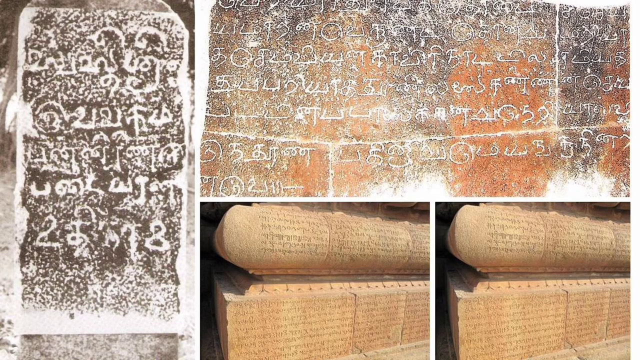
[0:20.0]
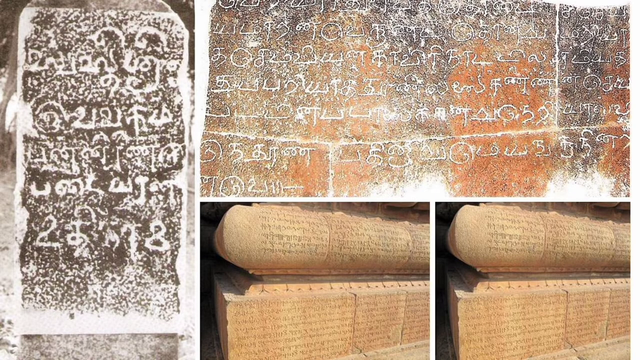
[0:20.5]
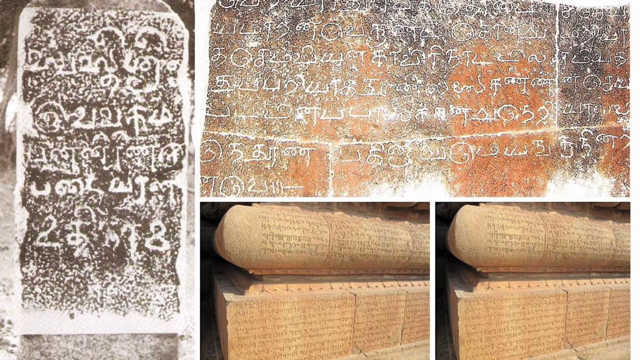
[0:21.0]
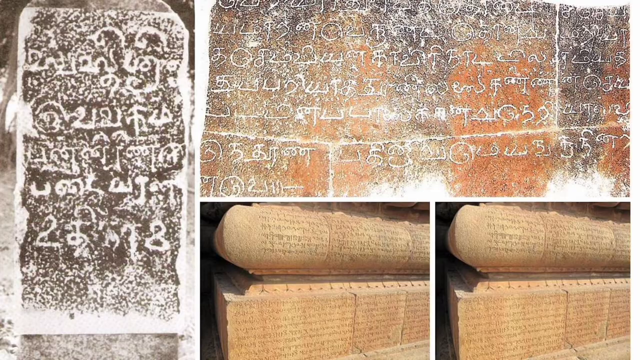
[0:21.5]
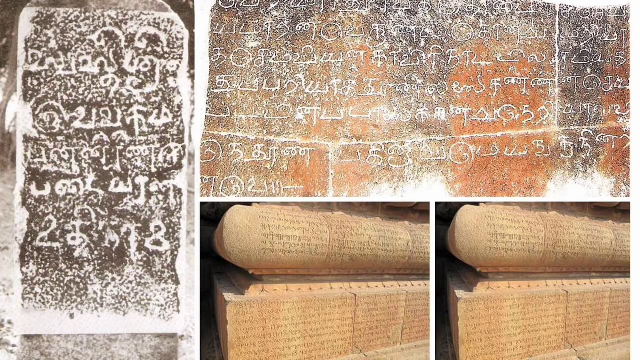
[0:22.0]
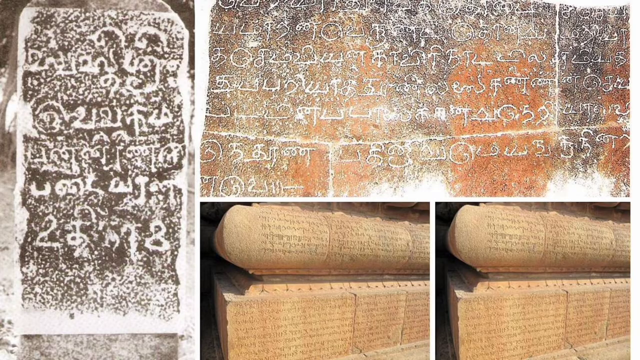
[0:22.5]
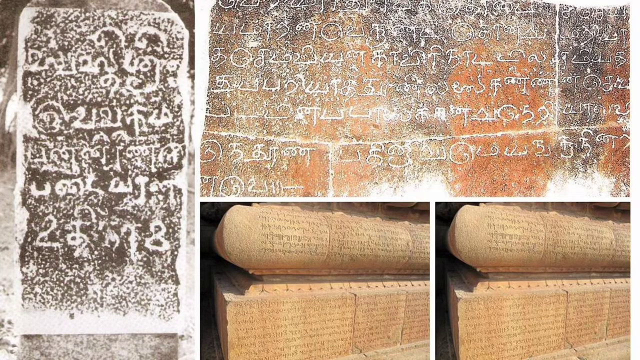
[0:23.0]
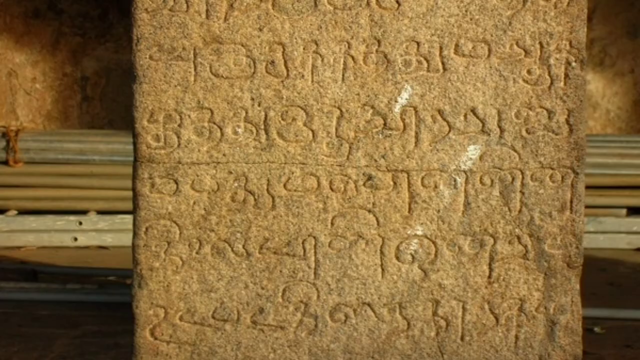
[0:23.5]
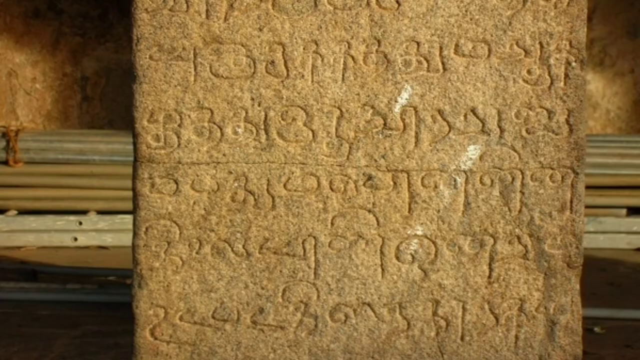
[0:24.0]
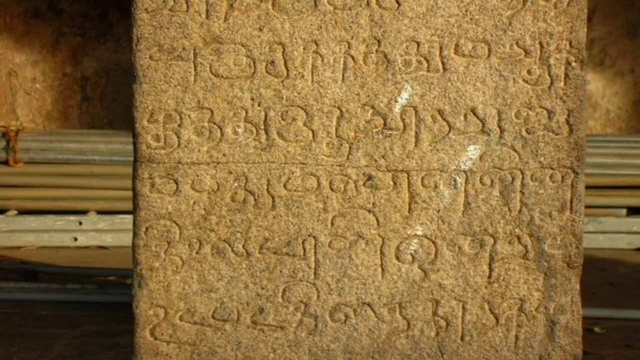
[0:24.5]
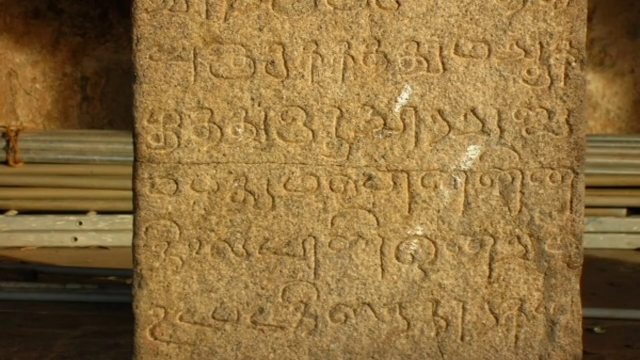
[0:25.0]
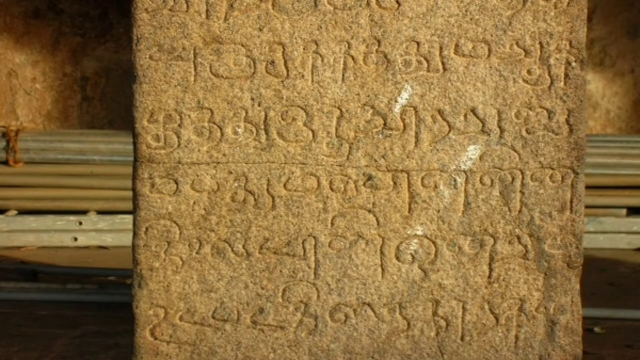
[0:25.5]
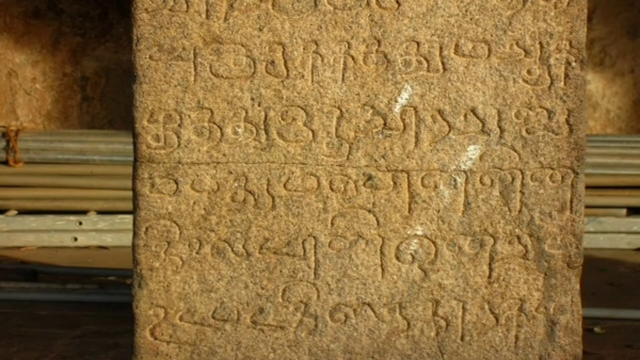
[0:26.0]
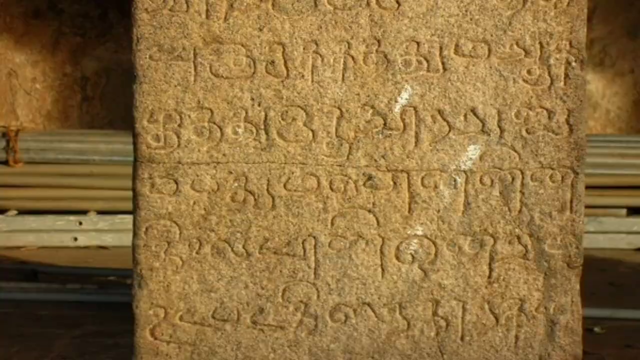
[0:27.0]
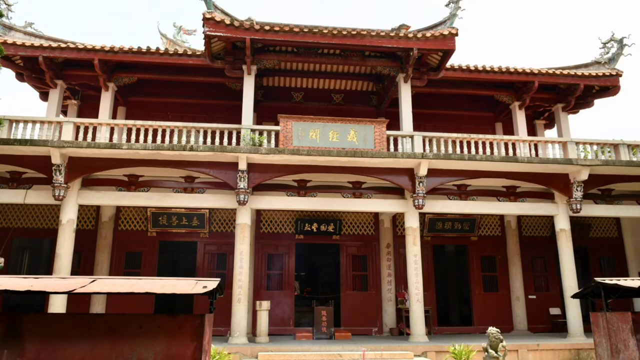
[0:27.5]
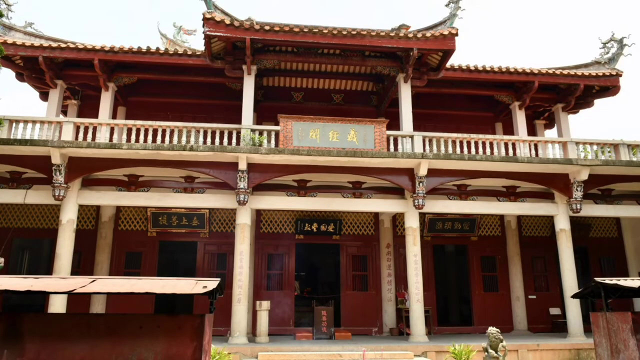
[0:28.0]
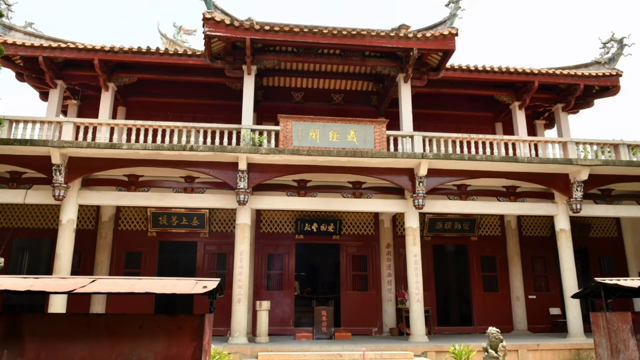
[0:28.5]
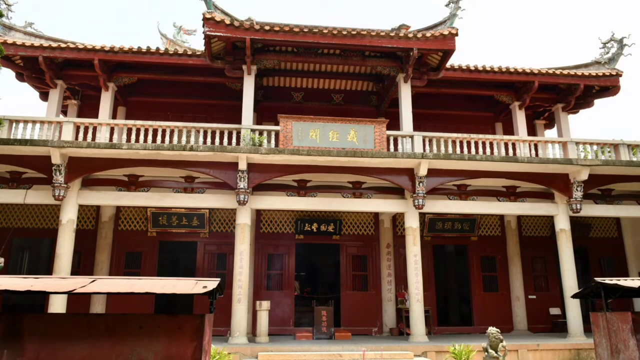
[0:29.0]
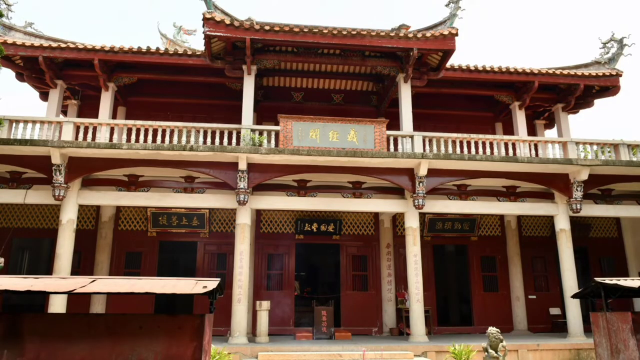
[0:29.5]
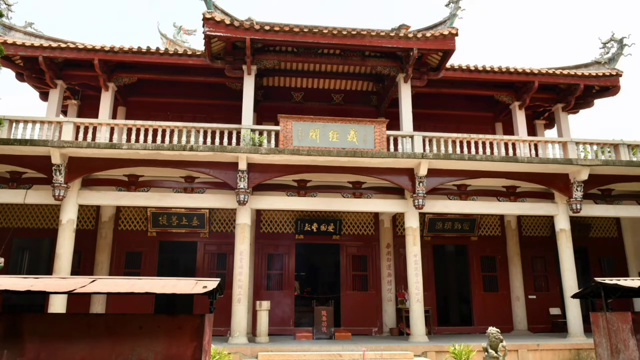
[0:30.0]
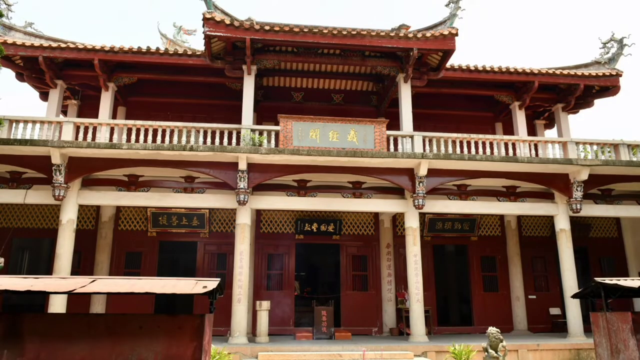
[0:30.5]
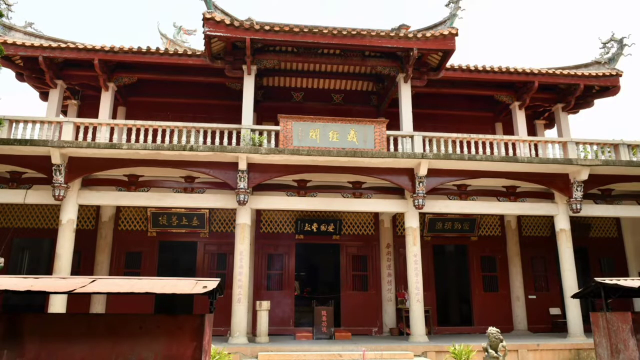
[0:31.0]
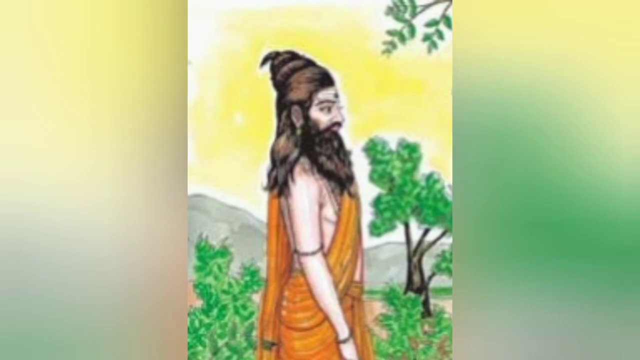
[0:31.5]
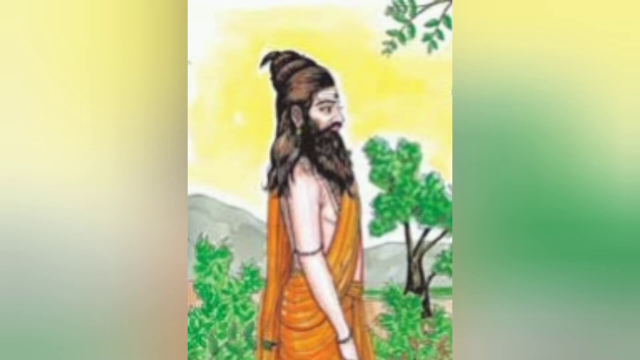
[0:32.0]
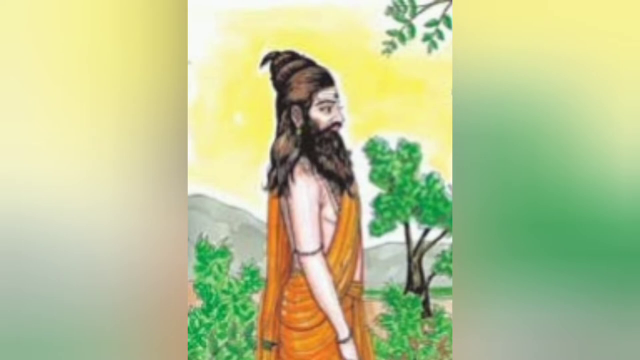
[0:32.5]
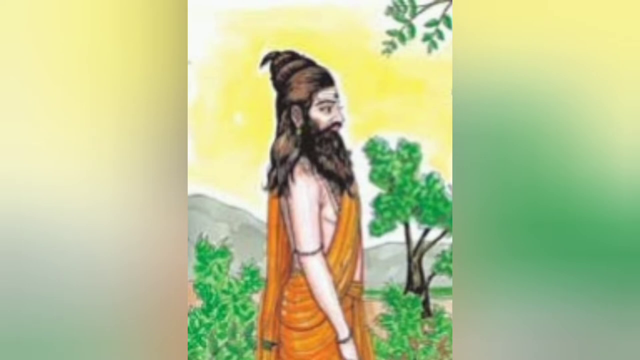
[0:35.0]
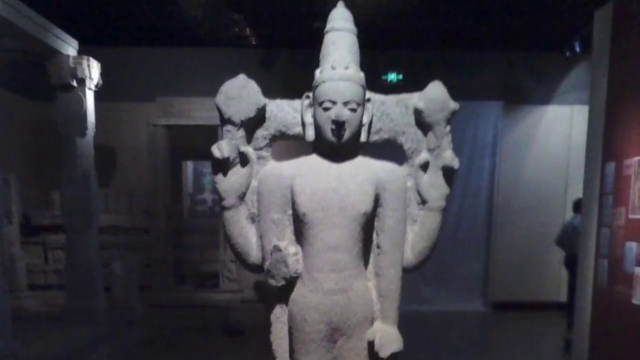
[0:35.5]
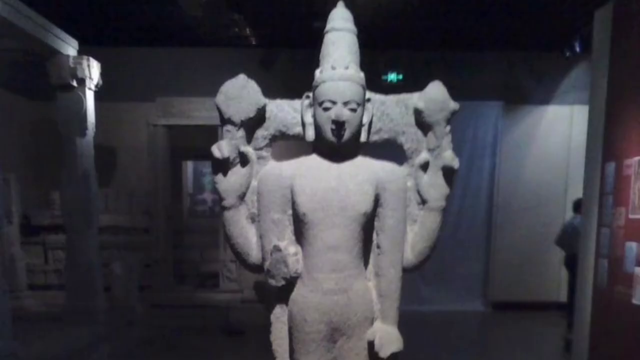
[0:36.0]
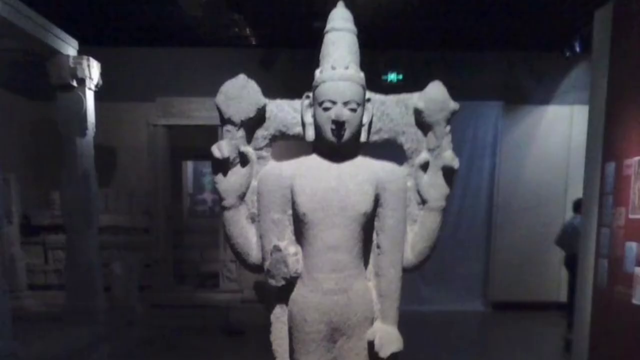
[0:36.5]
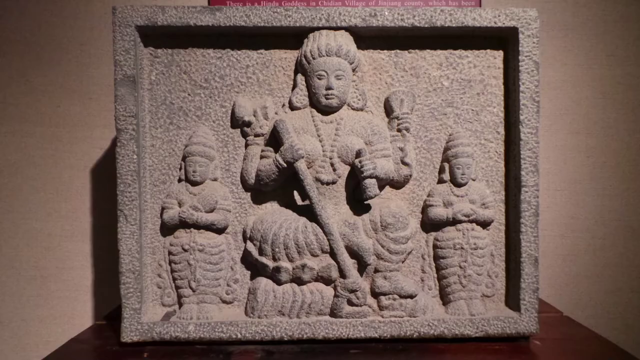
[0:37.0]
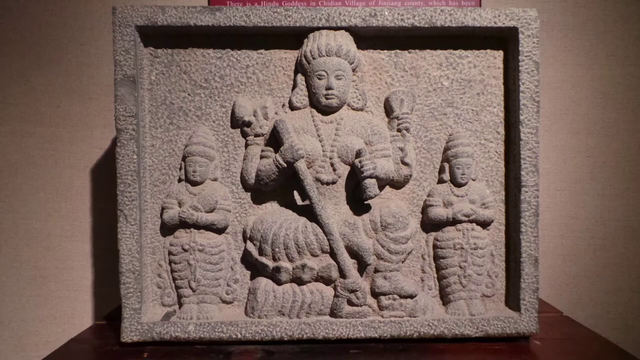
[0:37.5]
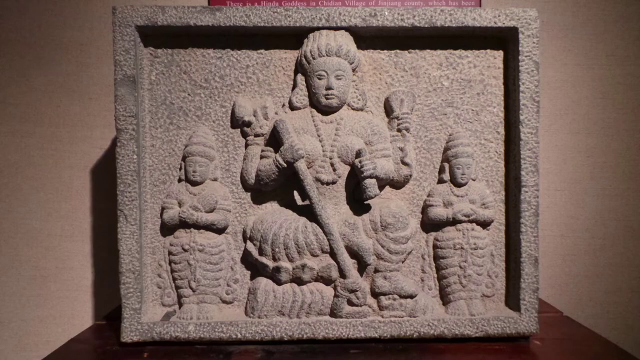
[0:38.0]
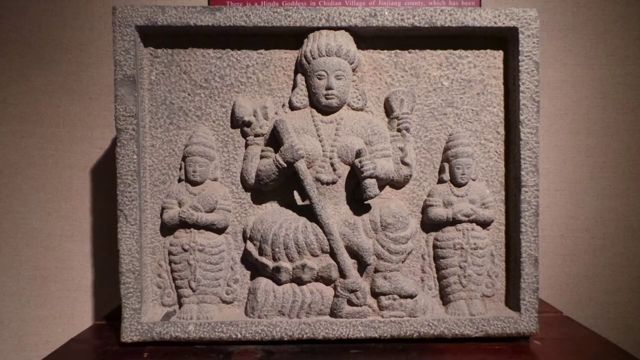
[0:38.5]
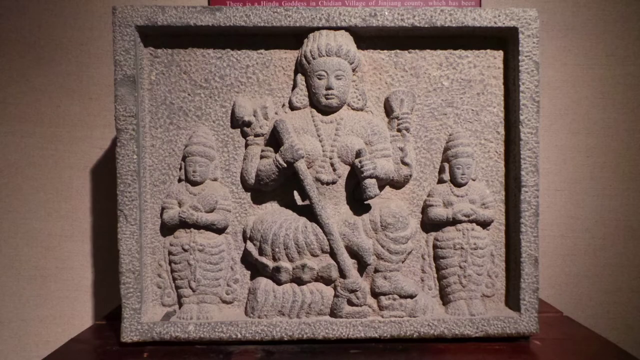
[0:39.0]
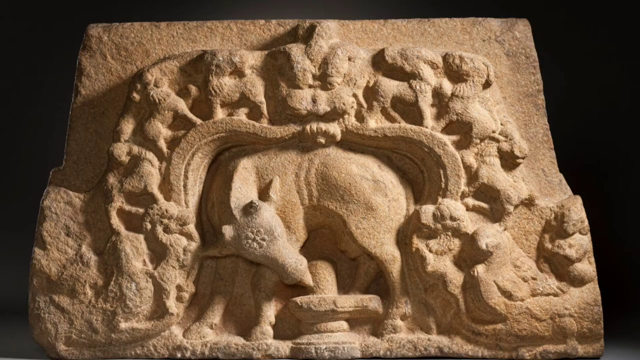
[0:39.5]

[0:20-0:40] Written scripts are shown; they look different from modern Chinese characters, and the tablets are not Chinese. A temple appears, along with a priest and statues of priests that appear to be of Indian influence. The priest wears orange Buddhist-style robes and has very long black hair, and his features look Indian. A statue in an Indian style shows a god with more than two arms and elongated ears, with eyes that look more Indian than Chinese. There also seem to be a few animals among the statues.